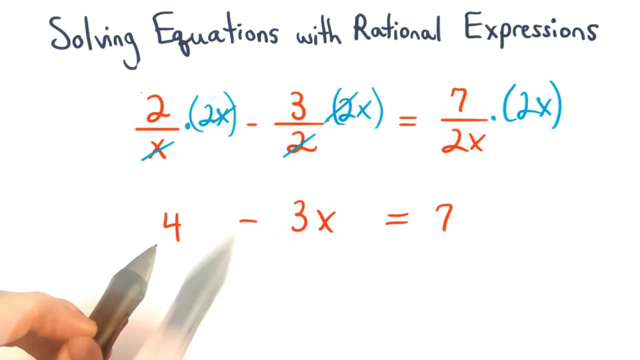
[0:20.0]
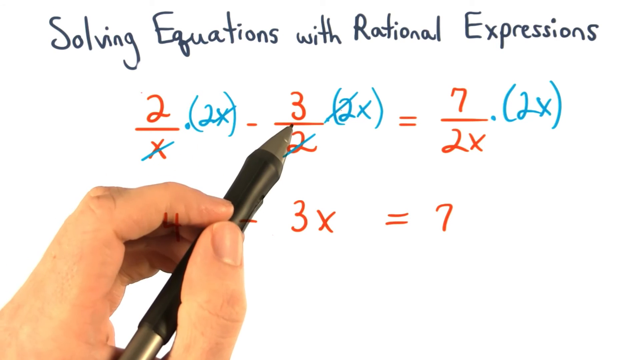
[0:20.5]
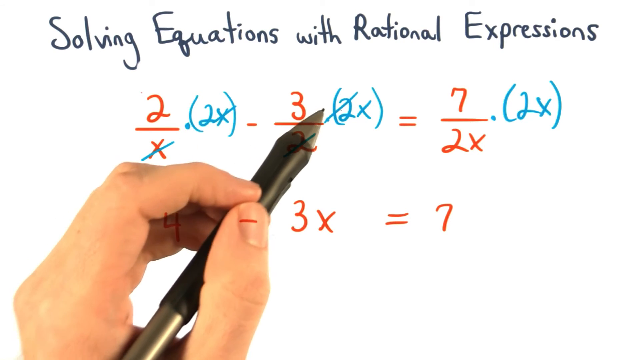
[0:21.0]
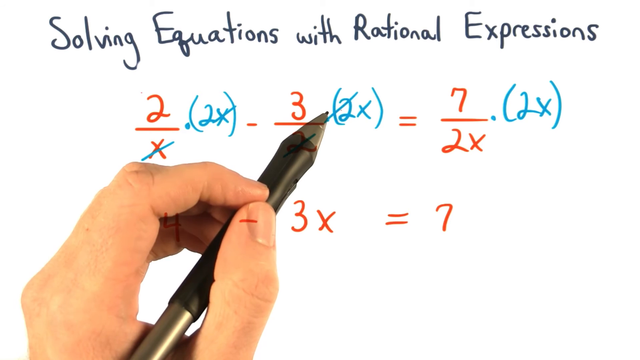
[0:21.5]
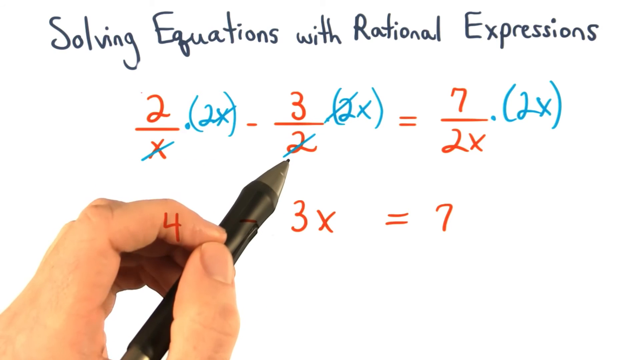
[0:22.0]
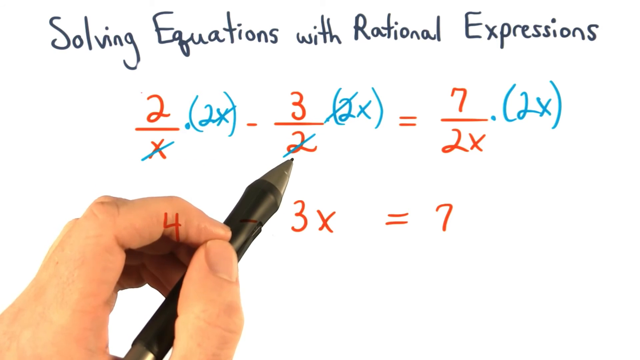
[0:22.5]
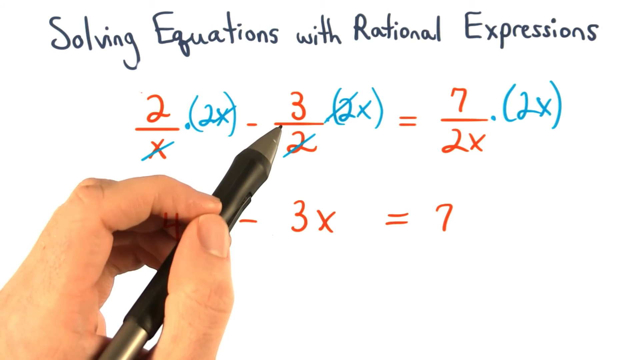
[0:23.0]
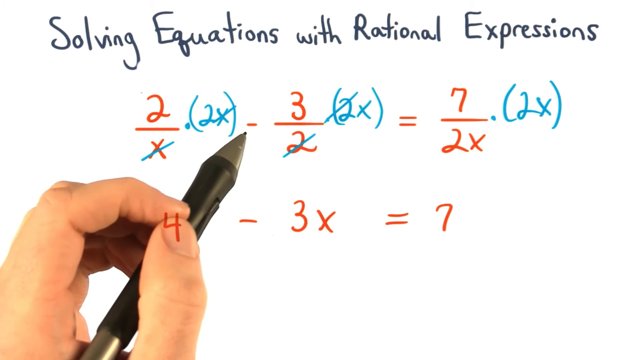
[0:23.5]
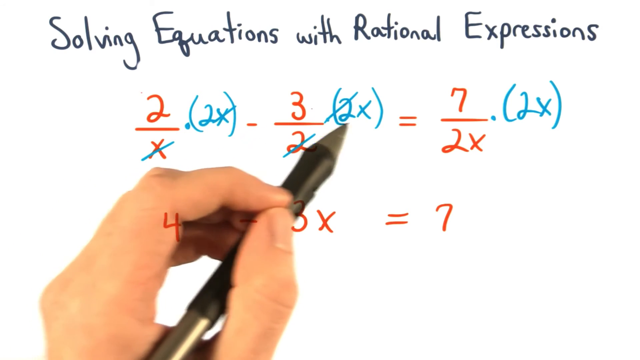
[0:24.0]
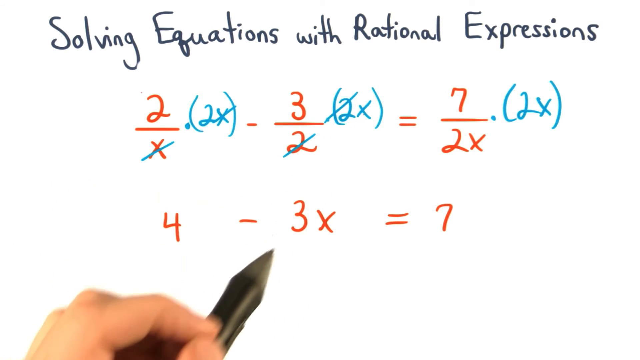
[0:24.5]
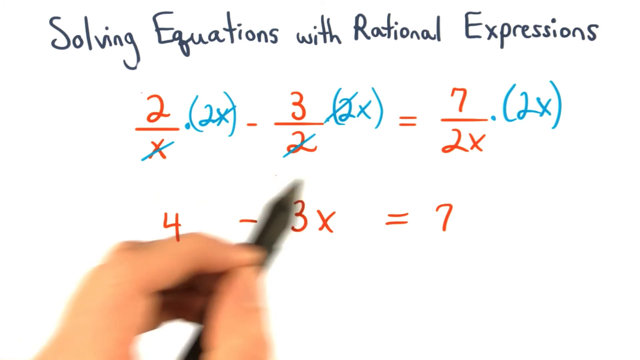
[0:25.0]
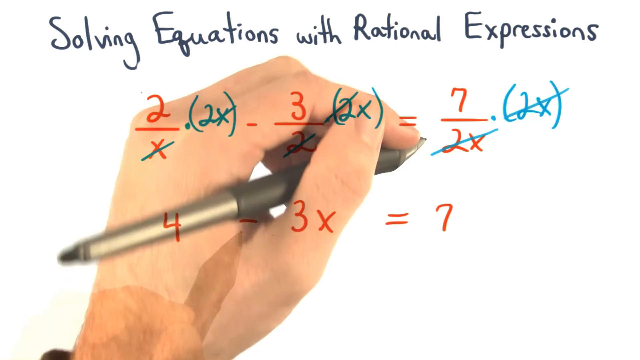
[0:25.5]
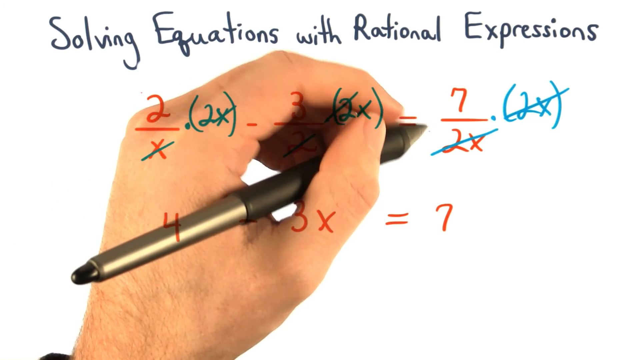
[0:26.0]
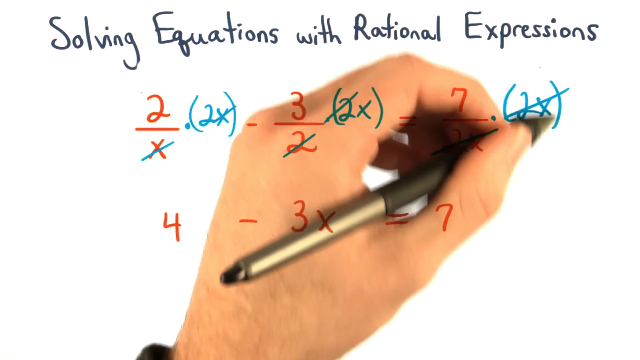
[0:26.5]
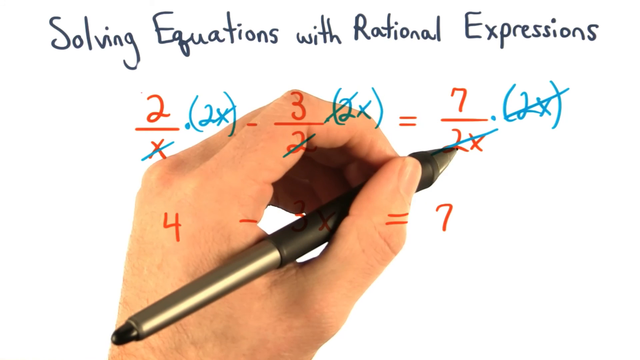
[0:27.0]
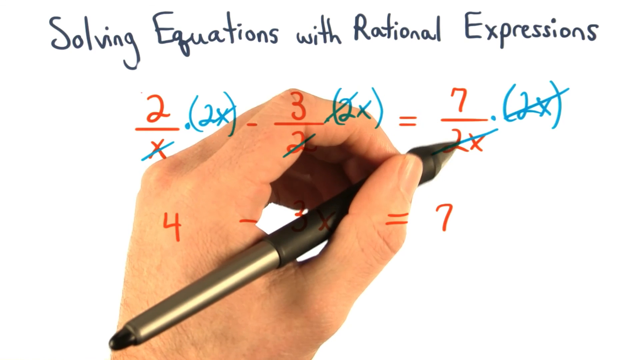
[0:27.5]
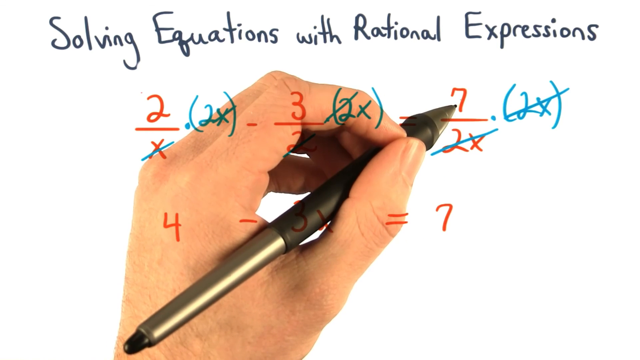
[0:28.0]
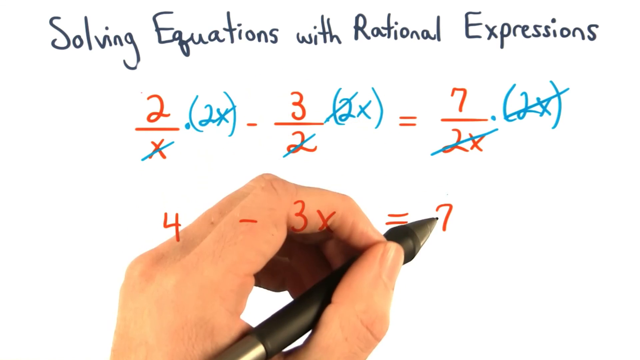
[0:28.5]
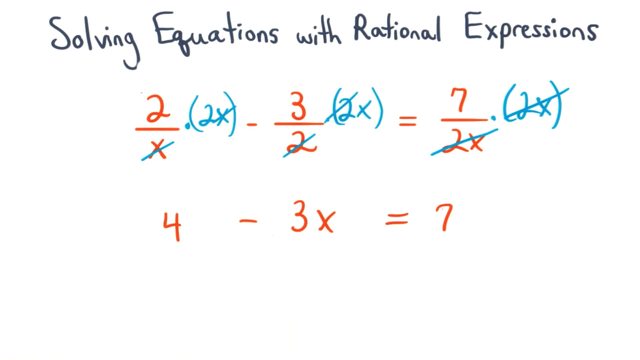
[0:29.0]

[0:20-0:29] The hand of a man is visible as he solves an equation step by step with a black pen, circling each part as he explains it. He works through the given expression 2/x minus 3/2, and the equation 4 minus 3x equals 7 is also shown. The video demonstrates solving equations with rational expressions in practice.